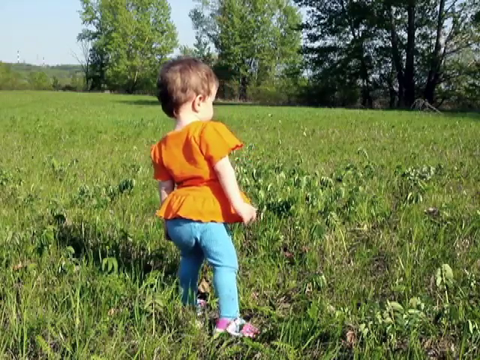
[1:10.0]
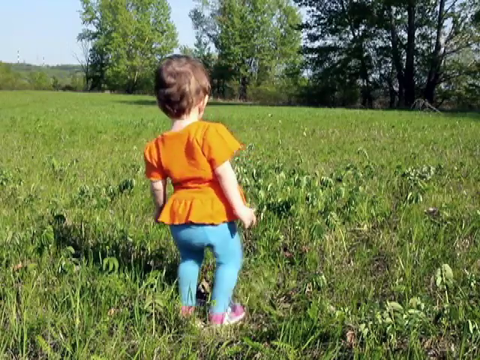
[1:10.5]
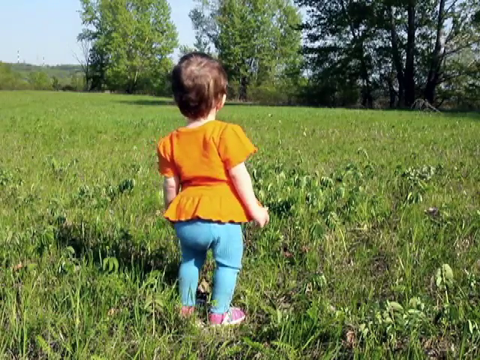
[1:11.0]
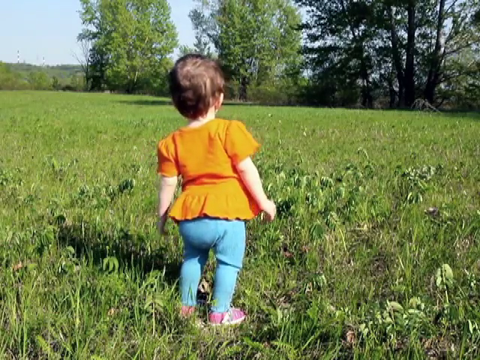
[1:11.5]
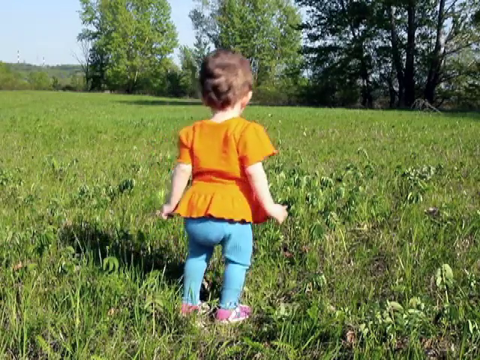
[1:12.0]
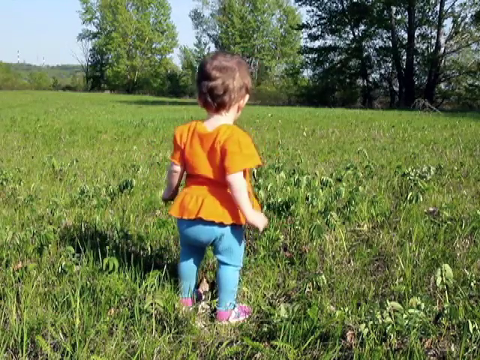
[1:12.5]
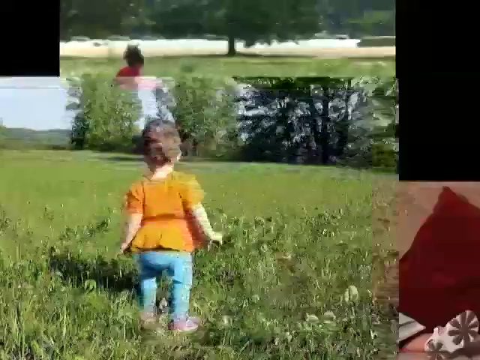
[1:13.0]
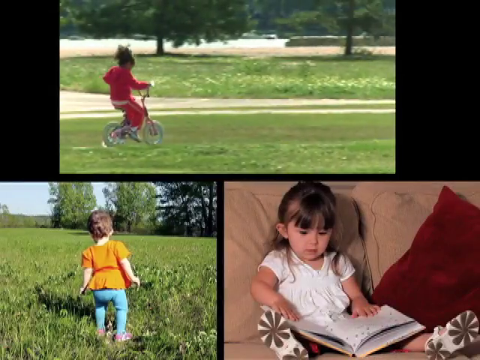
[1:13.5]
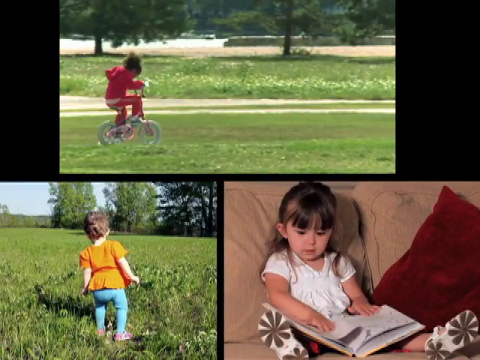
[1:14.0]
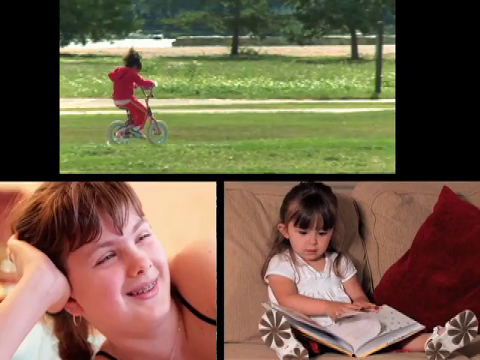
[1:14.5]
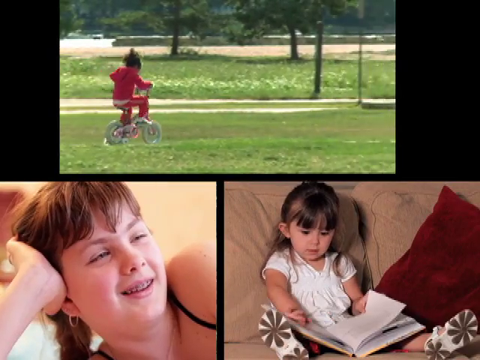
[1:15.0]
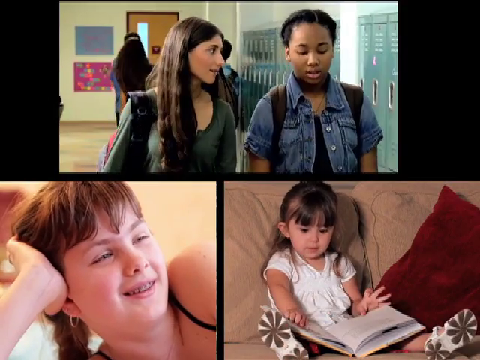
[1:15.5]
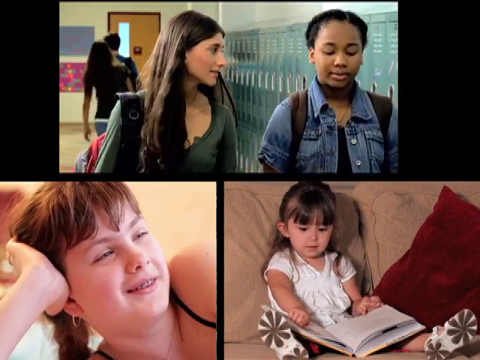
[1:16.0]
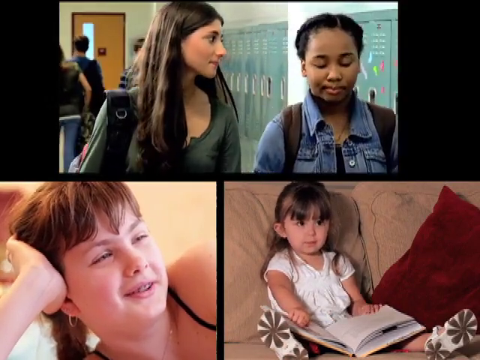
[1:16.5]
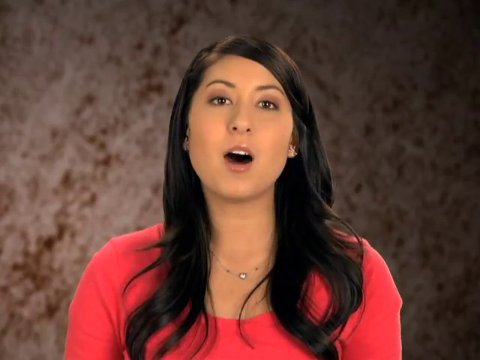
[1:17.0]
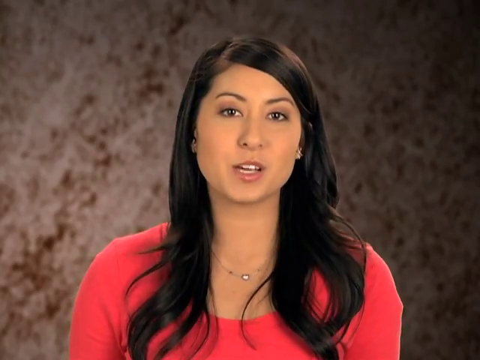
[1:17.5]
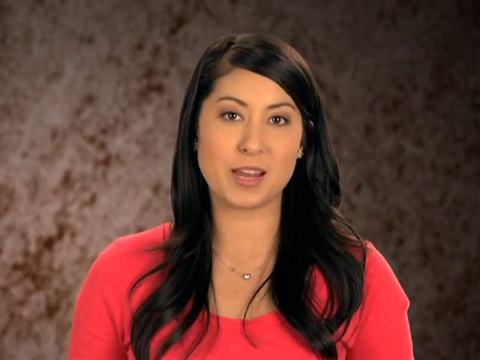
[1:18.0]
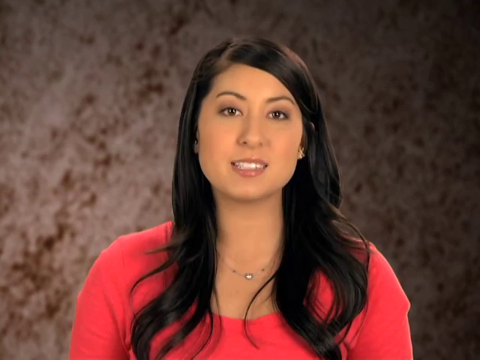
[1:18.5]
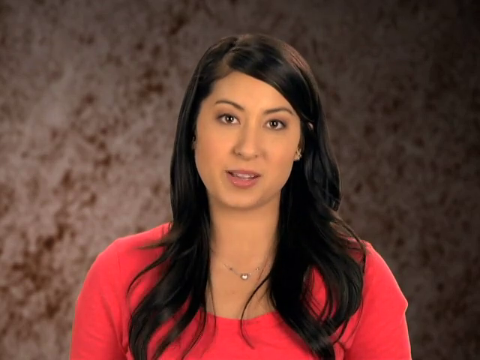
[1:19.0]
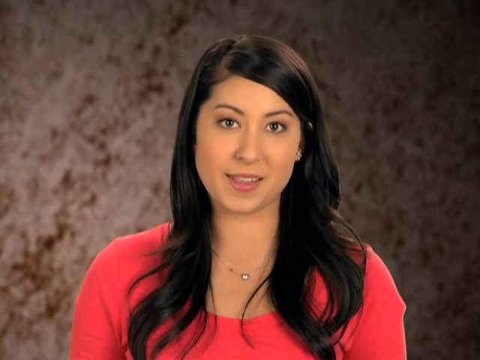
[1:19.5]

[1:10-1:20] The scene moves to a grassy area outdoors with a toddler, a Caucasian girl of approximately 15 months with very short brown hair, wearing an orange frilly top, blue pants and little shoes. She is visible from the back. Trees are visible along a tree line in the background, and the sky is light blue on a sunny day. The view then pans to three different images of various children: one large rectangular image on top and two smaller rectangular images on the bottom. The child at the top is on a tiny bicycle, wearing a red jogging suit, with shorter brown hair pulled back, on a sunny day with trees visible in the background. The child on the bottom left is a Caucasian girl with braces and short hair, leaning on her right arm with her hand against her head, propping it up, looking toward the right; she has light blue eyes and wears a black top and hoop earrings. To the right is a girl toddler who appears to be Caucasian, with longer brown hair and a white top, sitting on a tan couch with a burgundy red throw blanket beside her and a book in her hands.